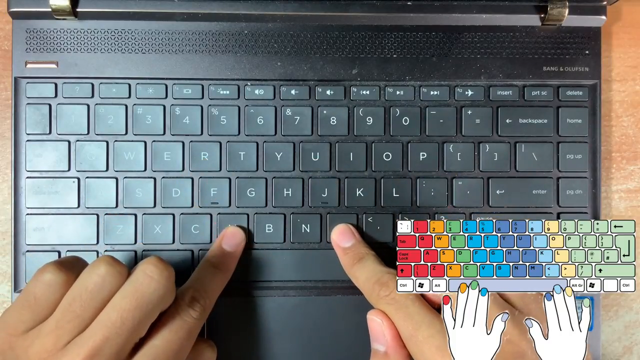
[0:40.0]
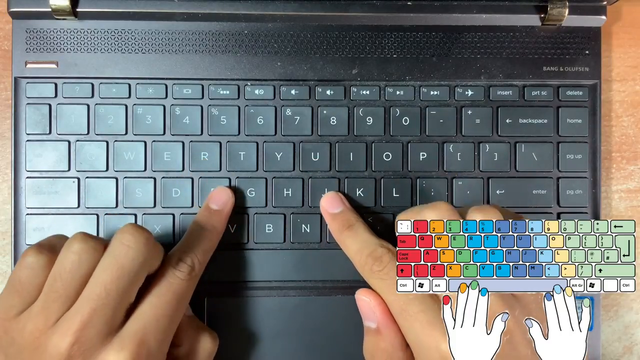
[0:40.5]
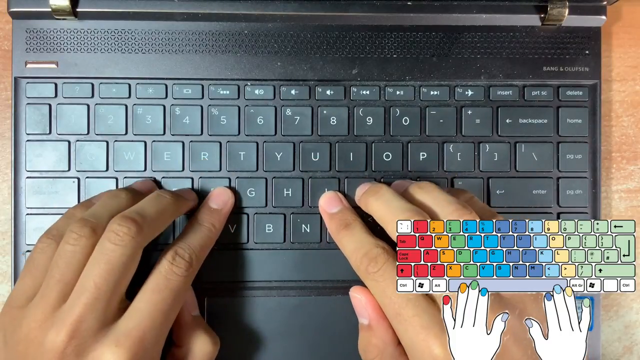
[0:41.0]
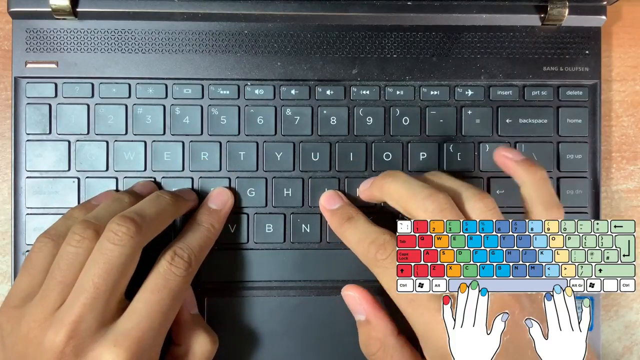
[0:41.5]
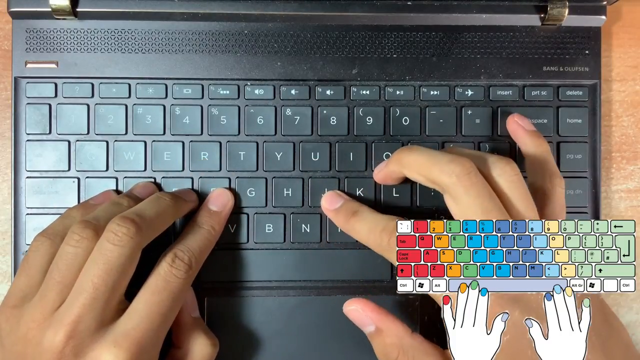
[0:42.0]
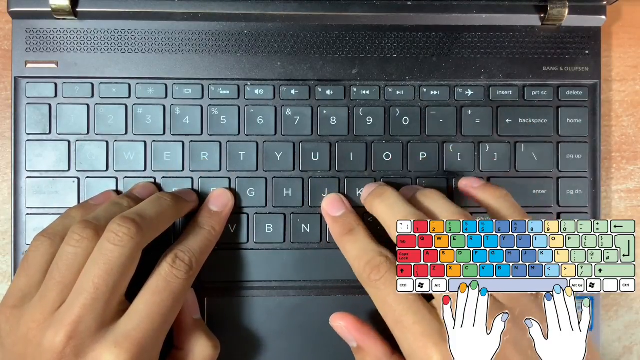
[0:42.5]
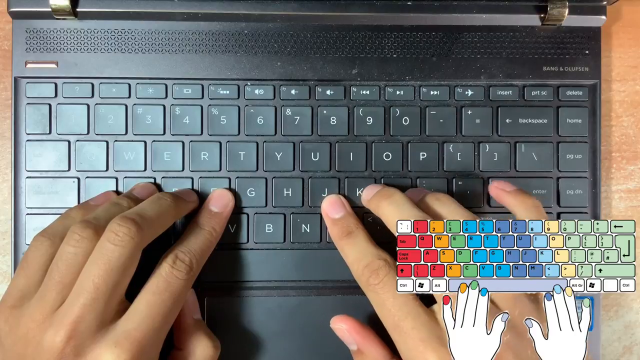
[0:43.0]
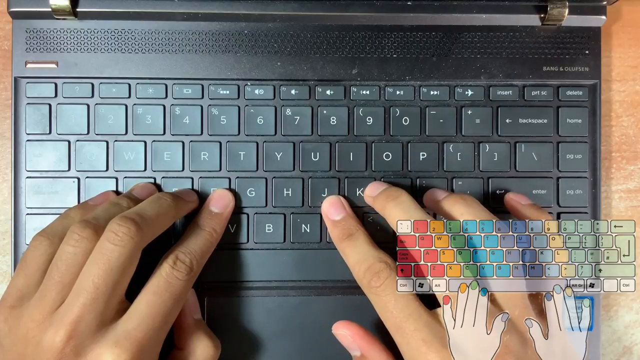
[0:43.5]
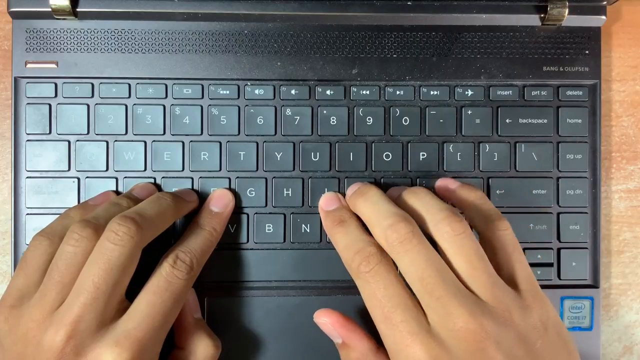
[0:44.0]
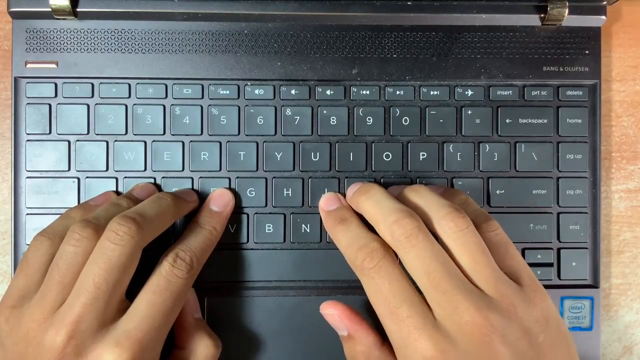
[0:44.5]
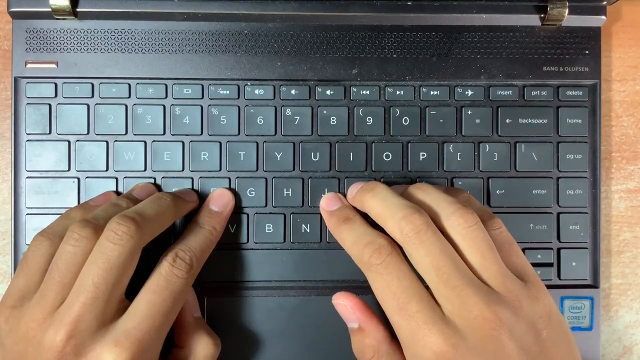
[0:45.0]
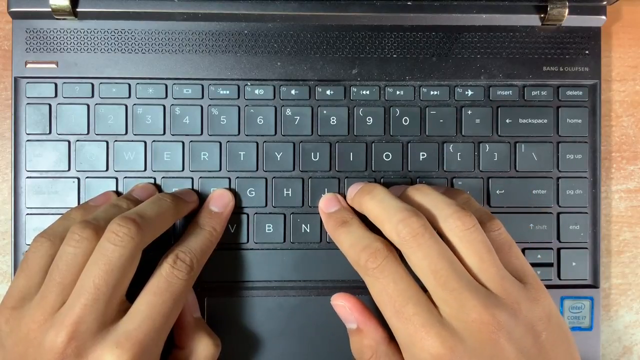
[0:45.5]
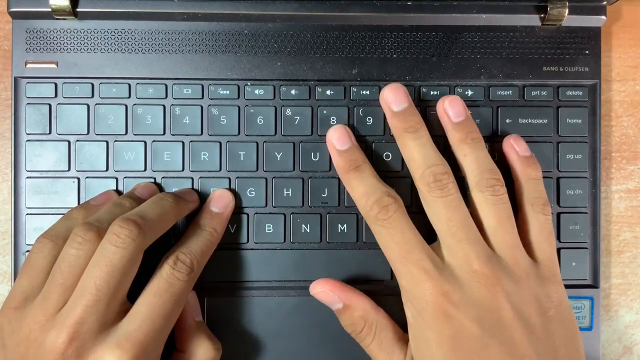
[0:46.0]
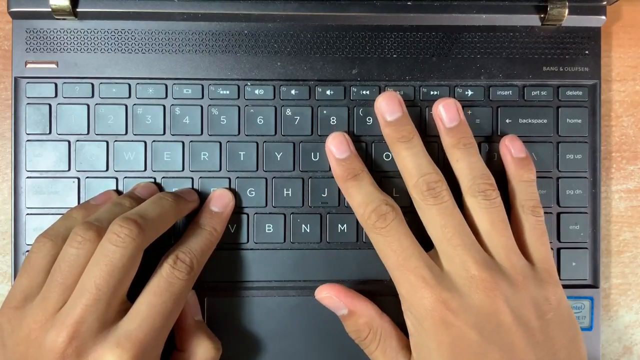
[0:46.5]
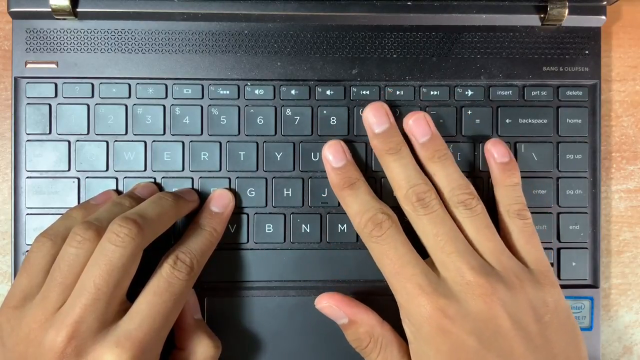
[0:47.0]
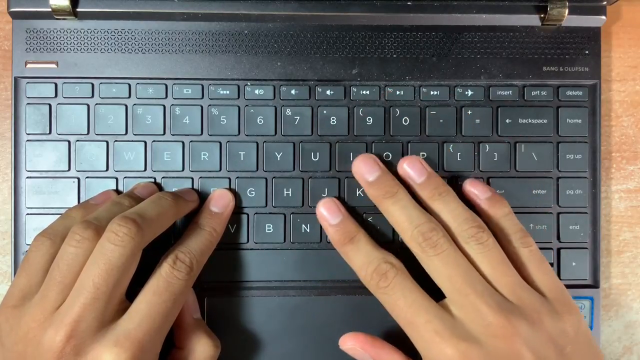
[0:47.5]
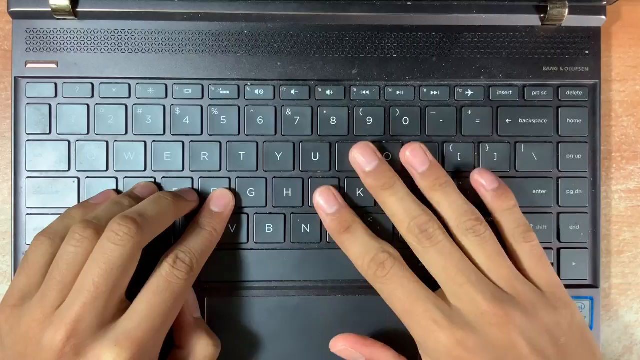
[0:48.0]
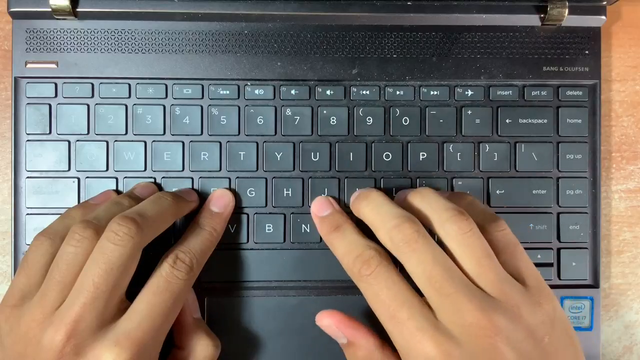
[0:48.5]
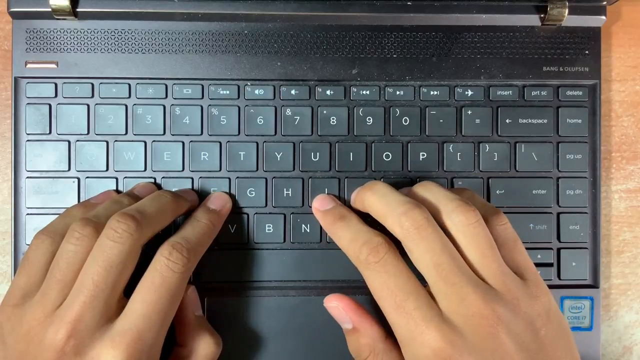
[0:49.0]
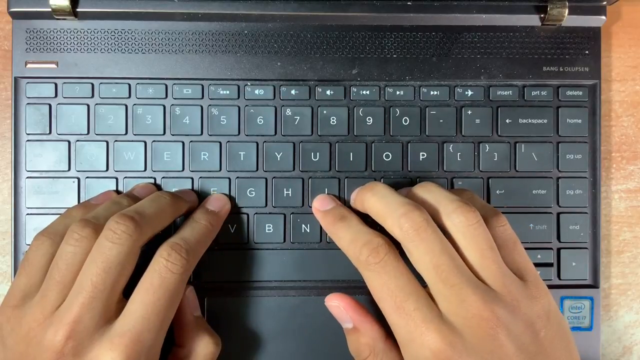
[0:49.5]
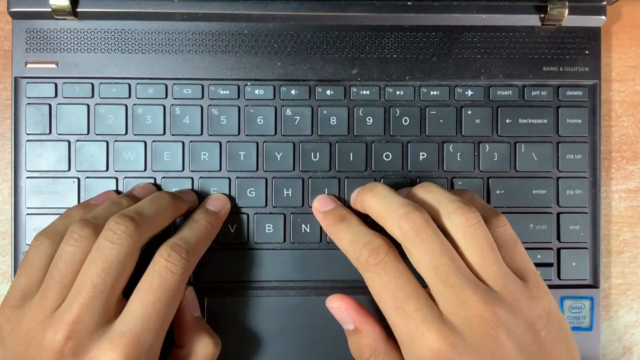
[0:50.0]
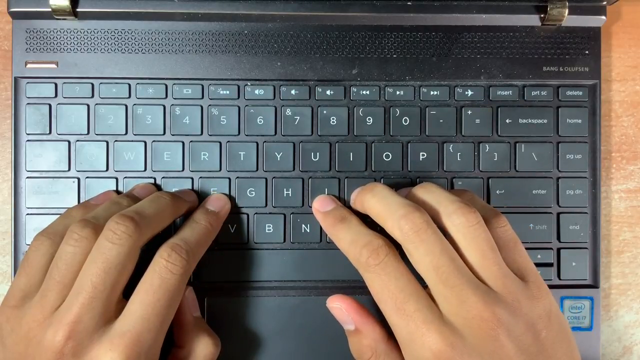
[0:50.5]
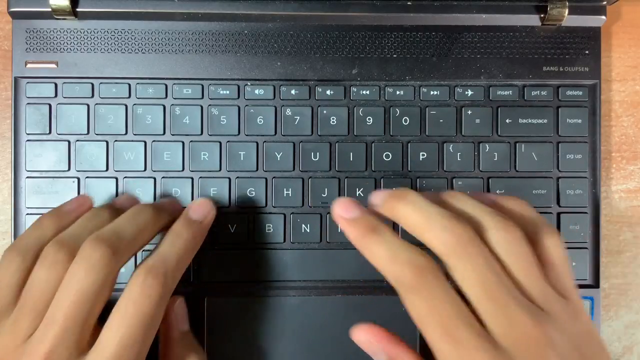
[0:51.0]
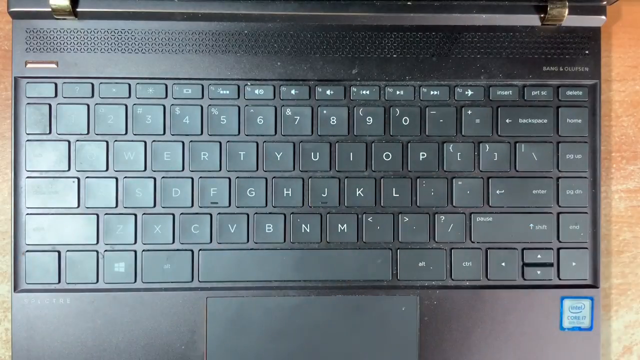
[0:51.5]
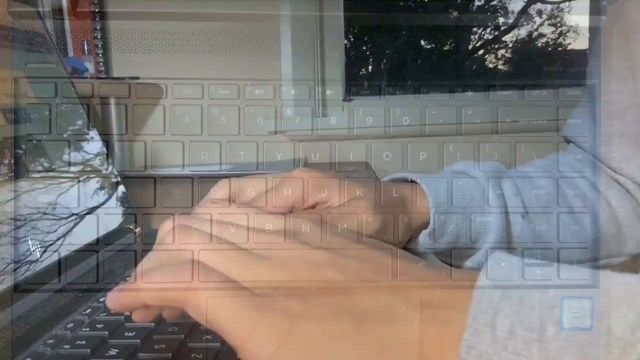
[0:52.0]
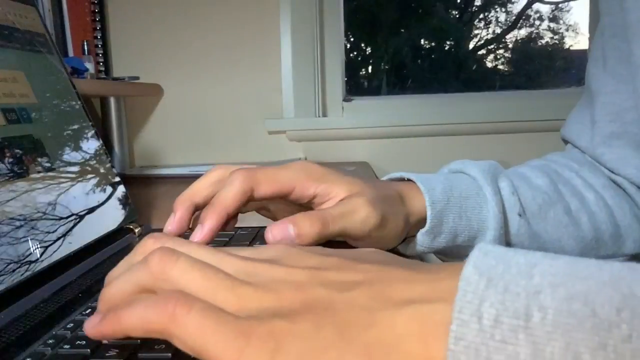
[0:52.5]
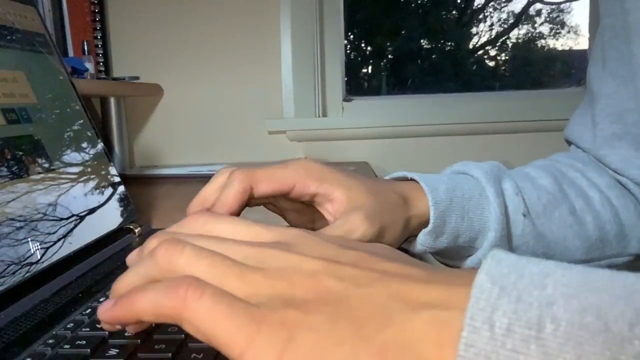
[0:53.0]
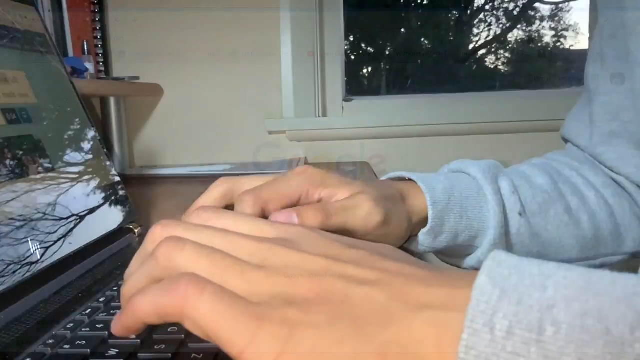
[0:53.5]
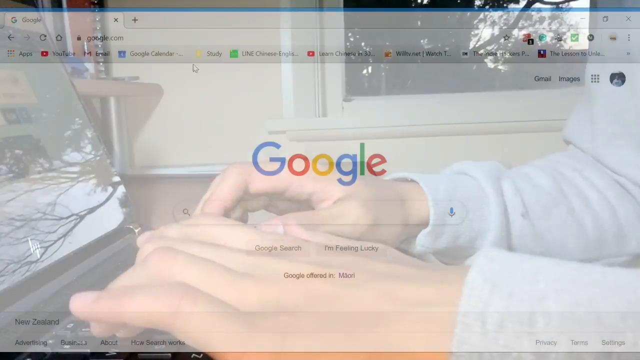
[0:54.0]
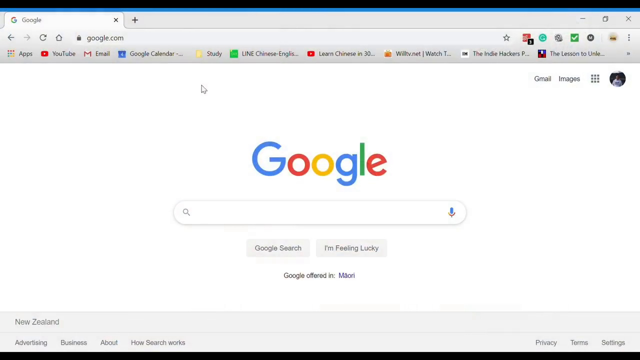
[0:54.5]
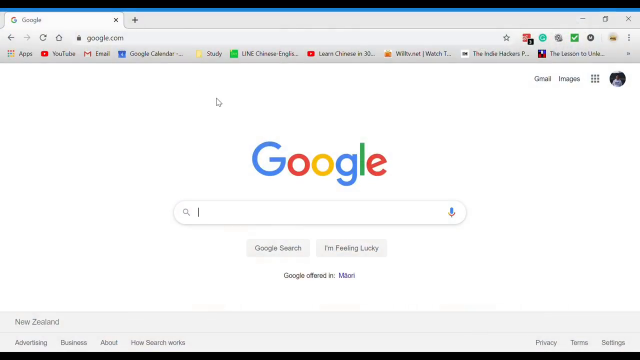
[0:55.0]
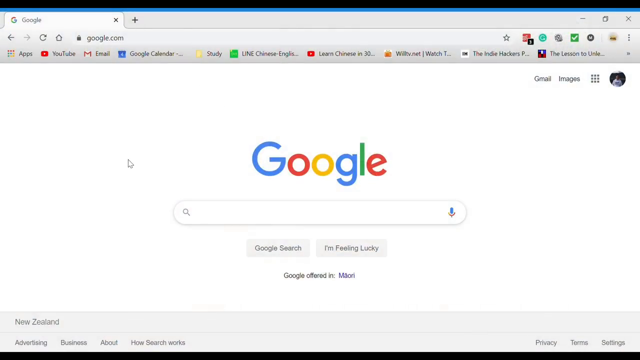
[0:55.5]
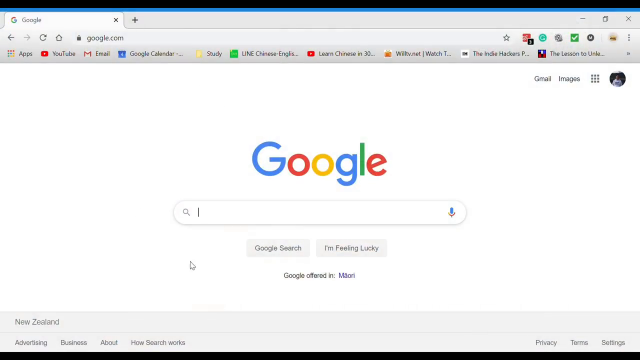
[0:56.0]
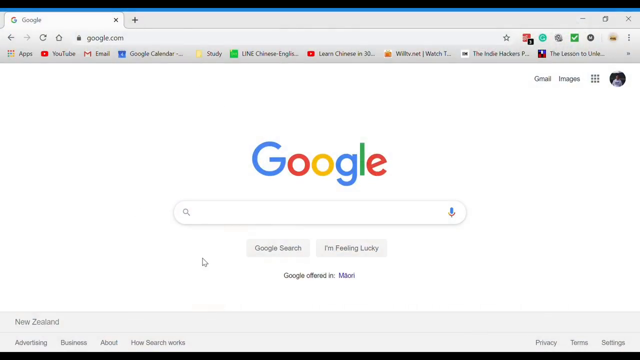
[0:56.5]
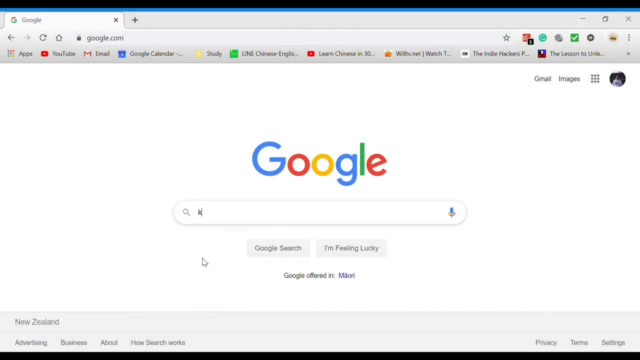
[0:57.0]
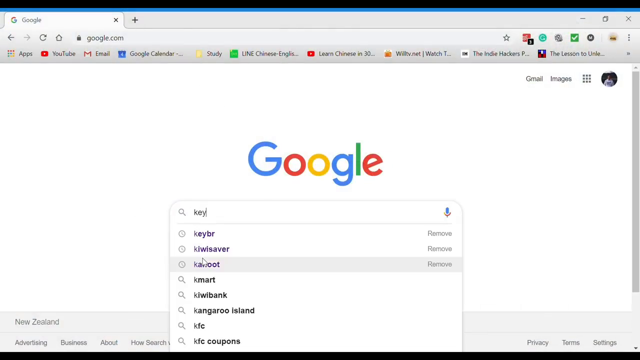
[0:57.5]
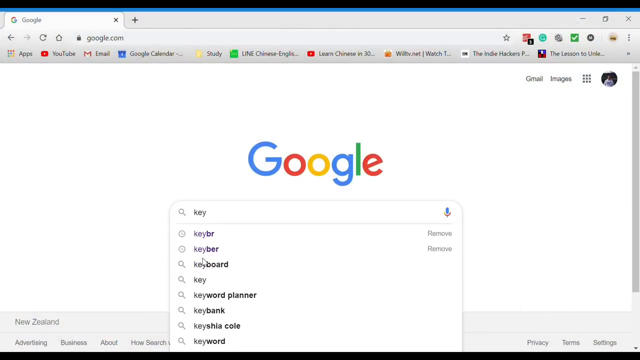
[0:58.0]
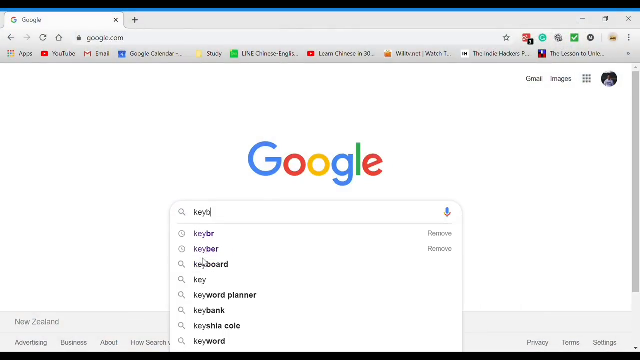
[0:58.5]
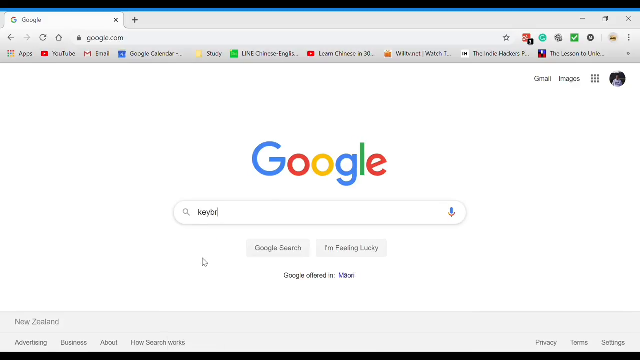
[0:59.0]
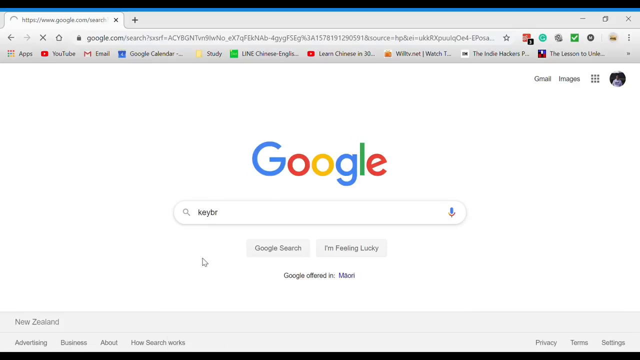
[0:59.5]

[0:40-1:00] With his fingers pointing at the V and M keys, the man moves them upward back to the position where his fingers are on the four keys, A, S, D, F and J, K, L, colon. The graphic showing the rainbow keyboard is on screen at first before it disappears, and his right hand opens up and moves a bit upward with his pointer finger on the I key. He then moves it slowly back to the J, K, L, colon position he had before. His hands stay in this position until he takes them away, and the screen fades to a side angle of his hands typing on the laptop. A Google page then comes on the screen, and the user moves his notes down below the search bar and starts typing "keybr".